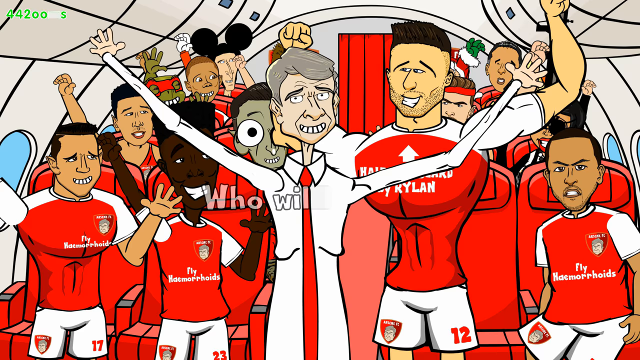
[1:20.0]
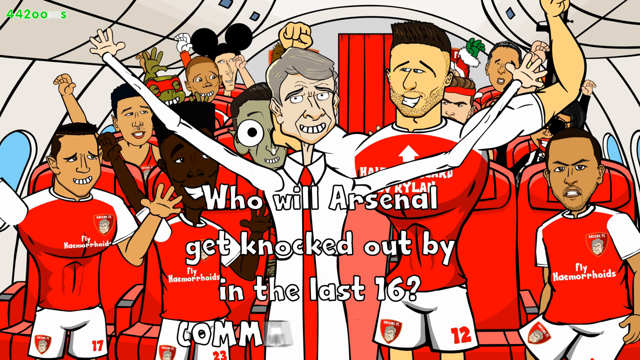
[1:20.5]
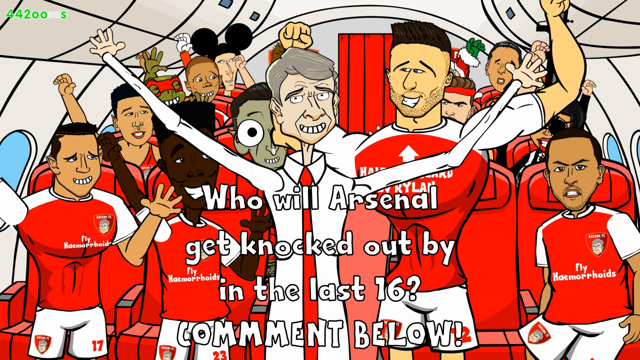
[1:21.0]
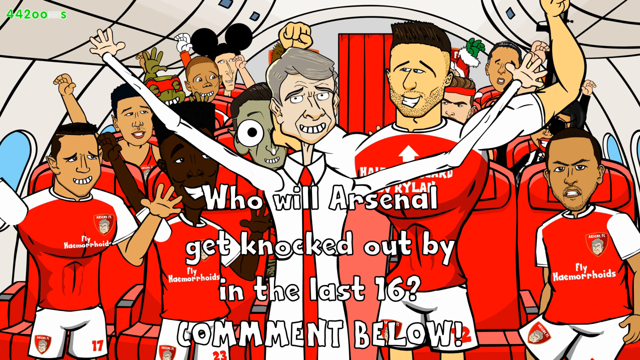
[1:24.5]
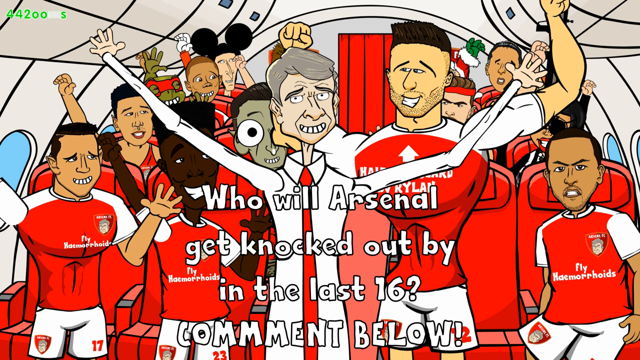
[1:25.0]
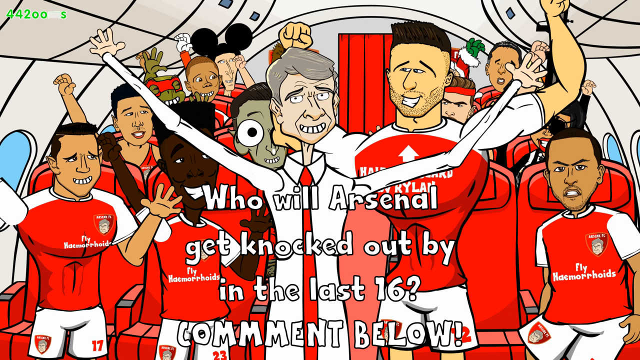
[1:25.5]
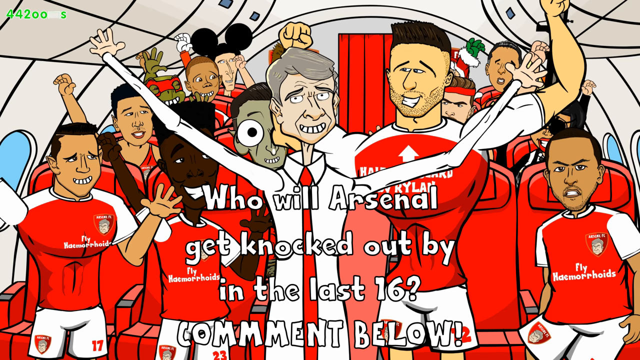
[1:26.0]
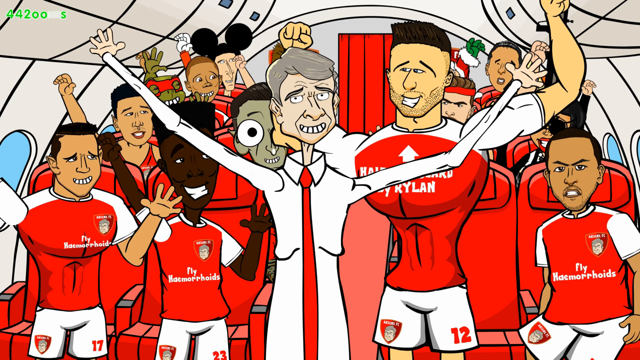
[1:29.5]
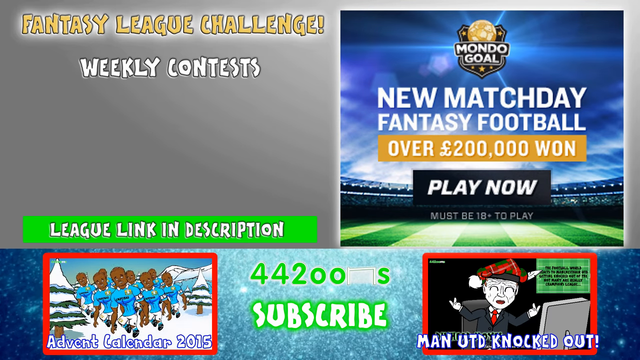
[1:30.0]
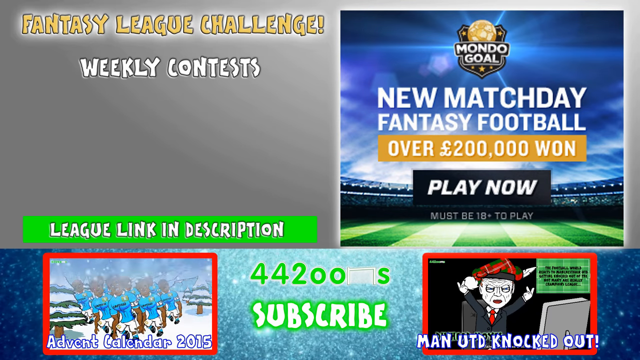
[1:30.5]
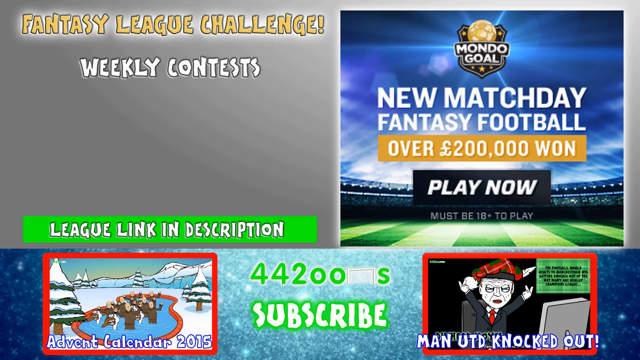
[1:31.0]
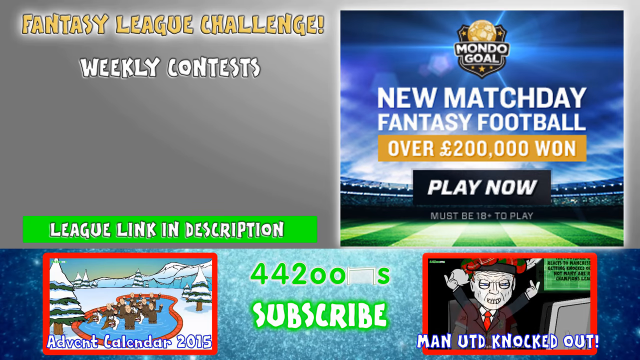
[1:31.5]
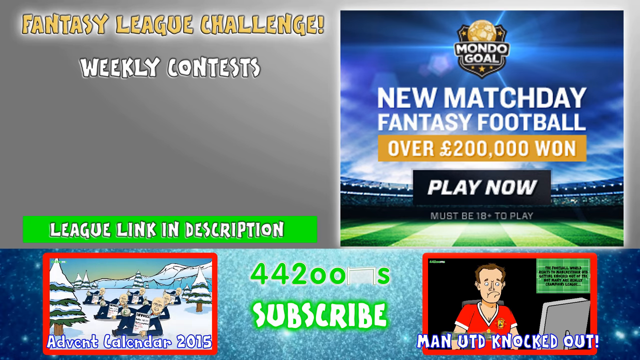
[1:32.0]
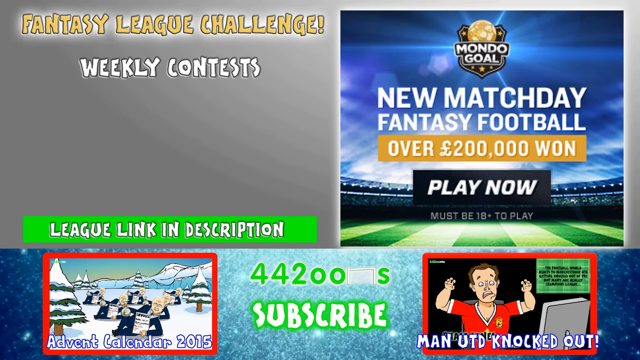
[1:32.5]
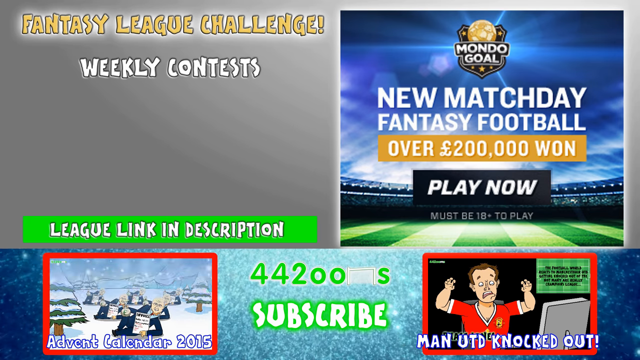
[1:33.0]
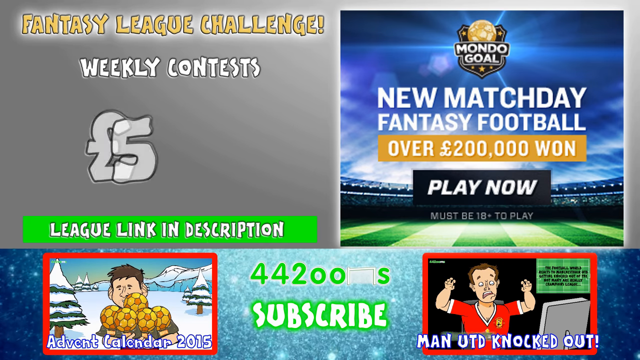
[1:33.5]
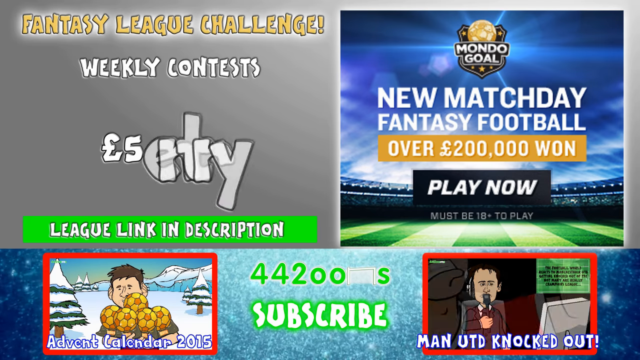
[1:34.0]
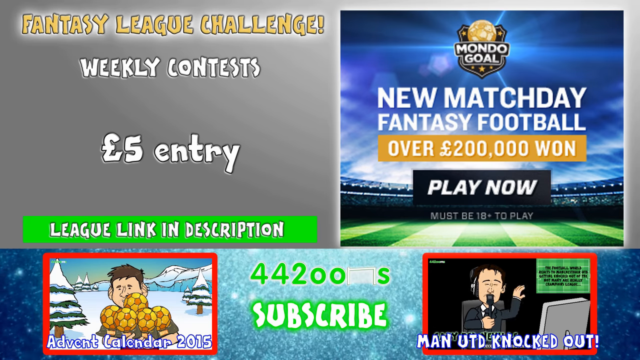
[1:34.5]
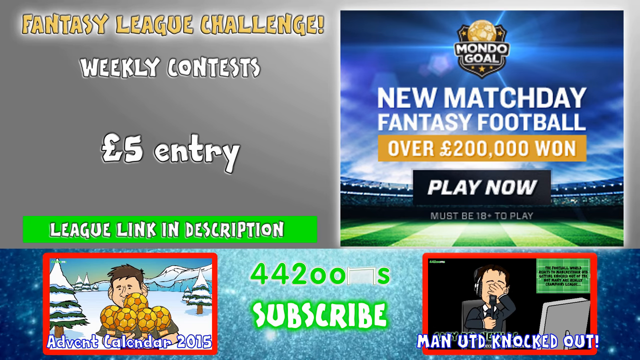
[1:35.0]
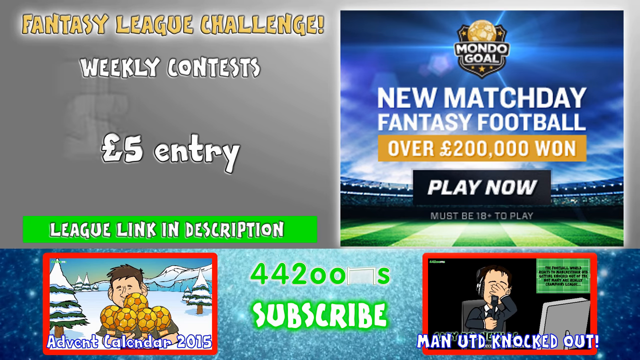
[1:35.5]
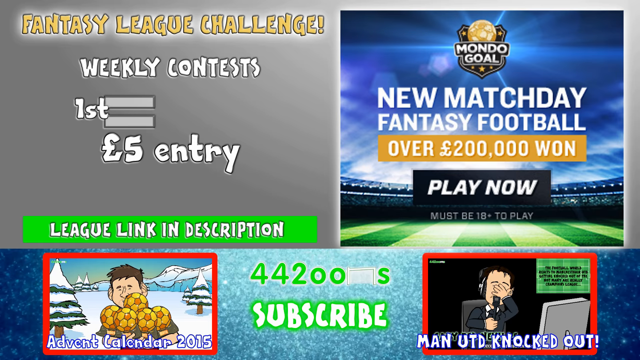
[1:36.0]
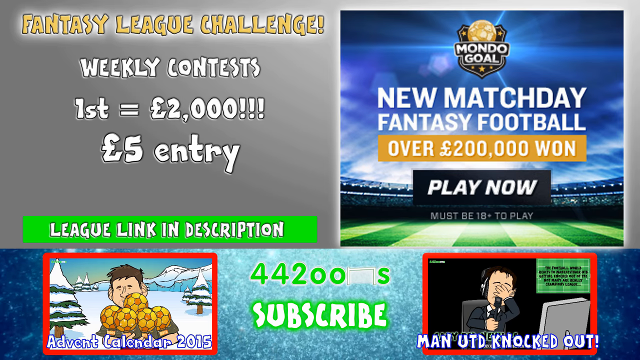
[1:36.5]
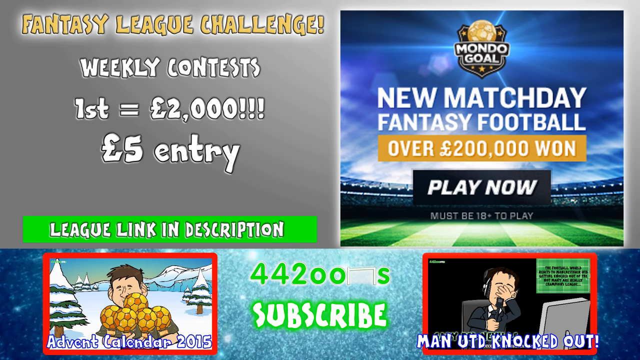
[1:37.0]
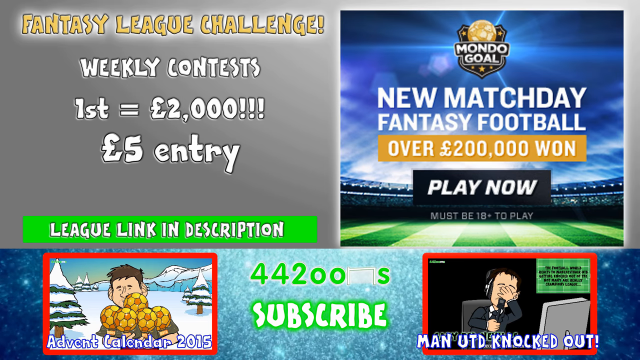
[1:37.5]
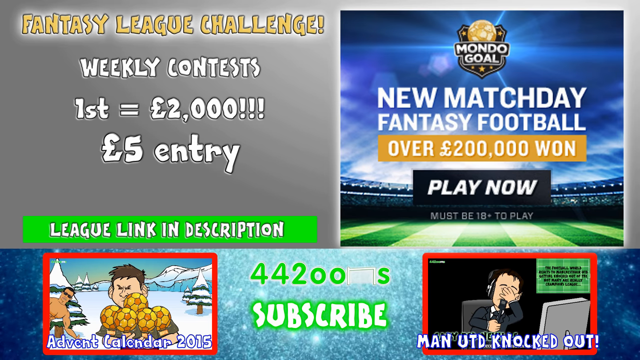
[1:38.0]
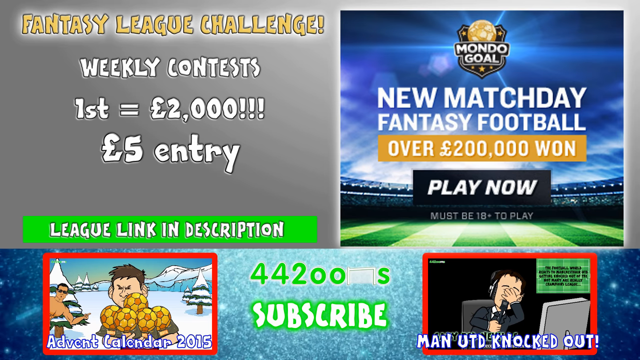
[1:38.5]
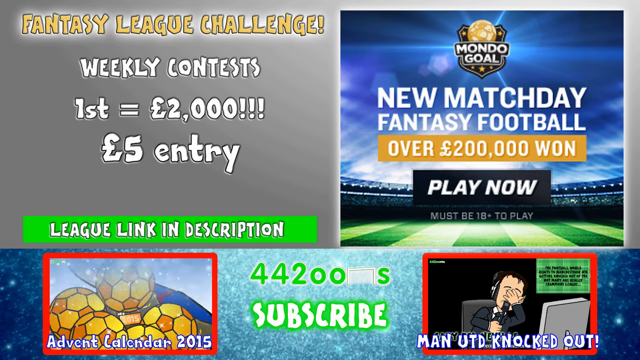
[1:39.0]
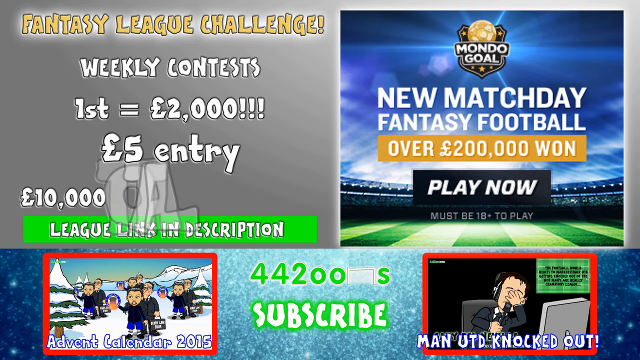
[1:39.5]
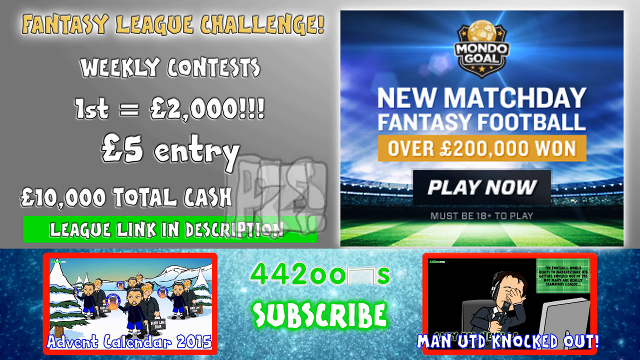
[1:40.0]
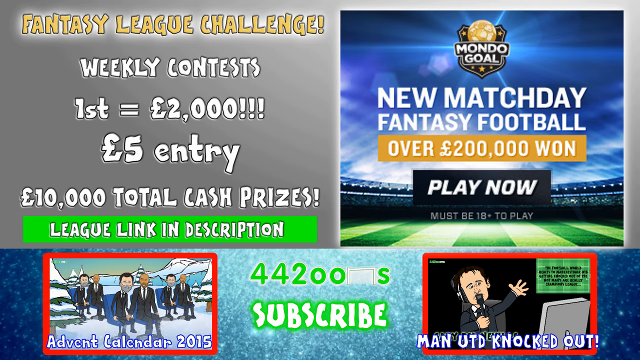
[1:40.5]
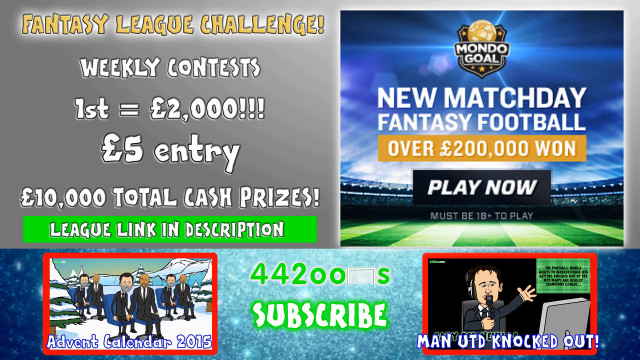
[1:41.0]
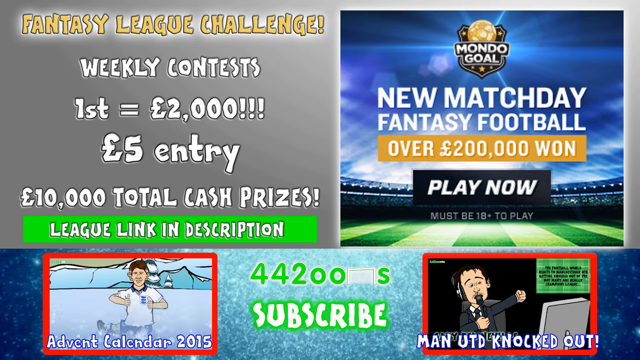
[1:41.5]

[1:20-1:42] The football team is still on the plane, returning from a victorious match. They are all wearing red, including the coach, who wears a thin red tie with a white shirt. He is very thin, with thin arms, a thin neck and gray hair, and his arms are up. The other players have their hands up as if cheering, wearing t-shirts that say "fly hemorrhoids." There is a black player, many brown players, a mutant ninja turtle player and one in Mickey Mouse ears. The exception is one Spanish-looking player on the lower right with a very angry look on his face, as if left out of the celebration. Words on the screen read "who will Arsenal get knocked out by in the last 16." Text about fantasy football challenges follows, including "new match day fantasy football," suggesting the video may be sponsored by a betting service.